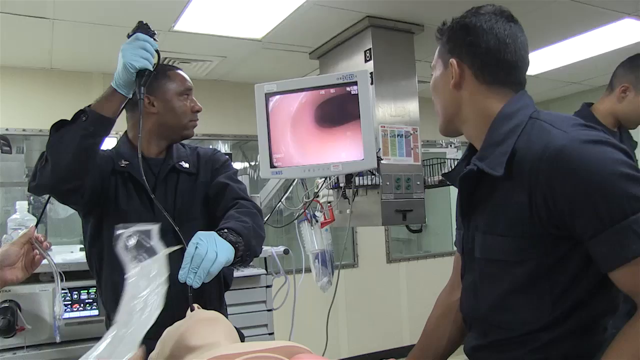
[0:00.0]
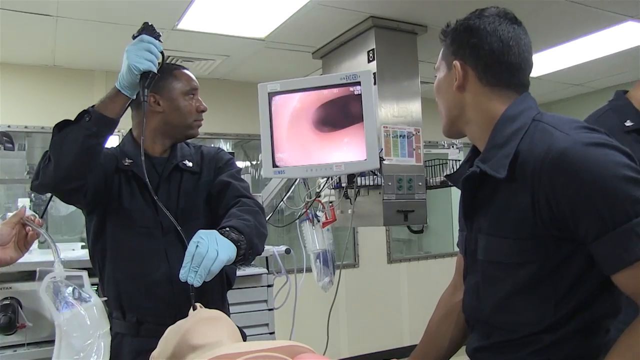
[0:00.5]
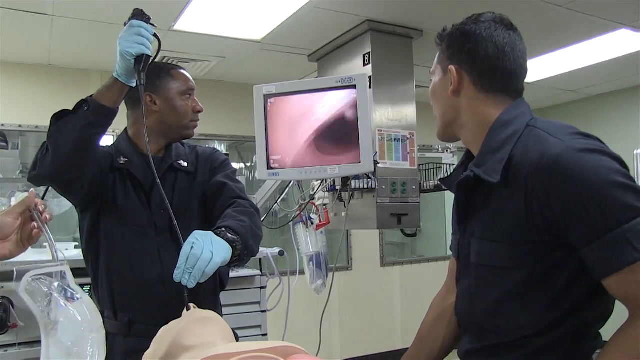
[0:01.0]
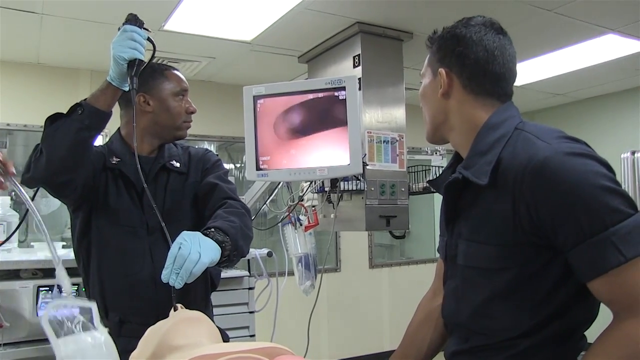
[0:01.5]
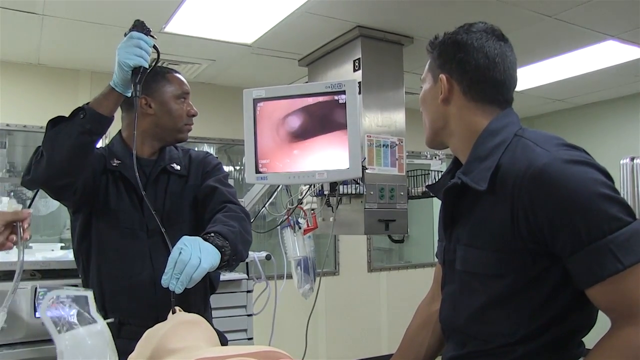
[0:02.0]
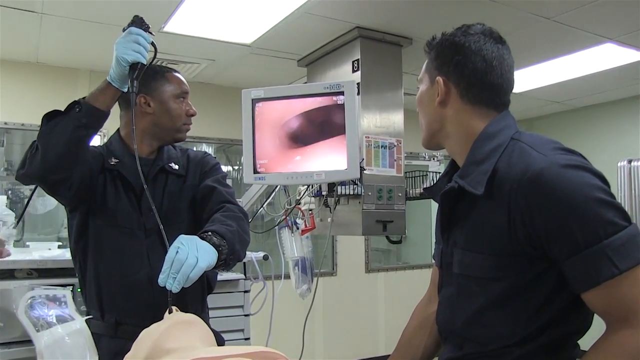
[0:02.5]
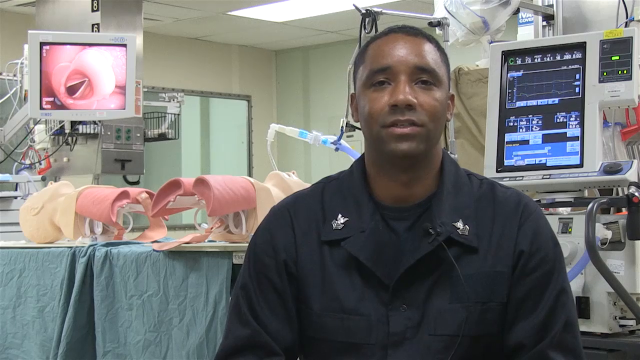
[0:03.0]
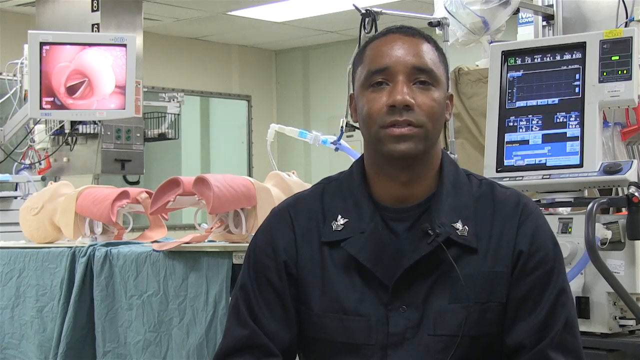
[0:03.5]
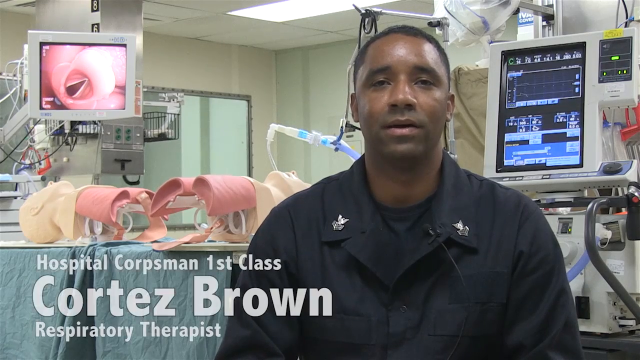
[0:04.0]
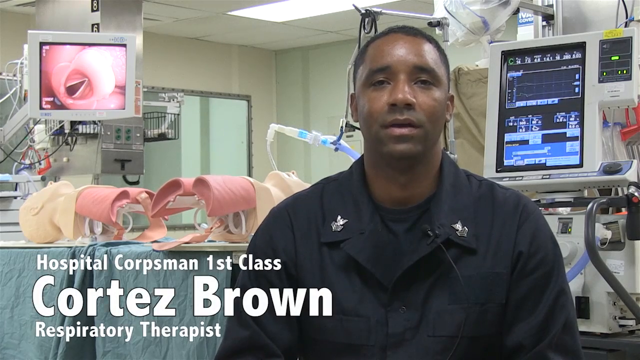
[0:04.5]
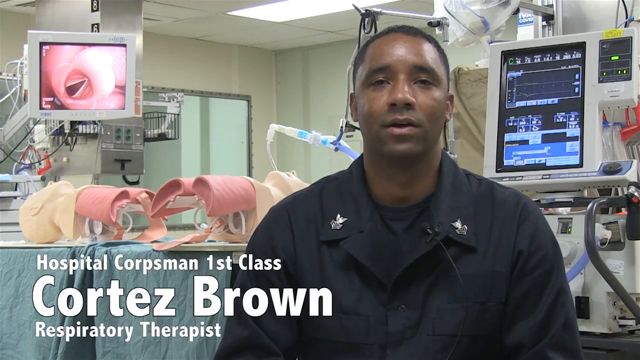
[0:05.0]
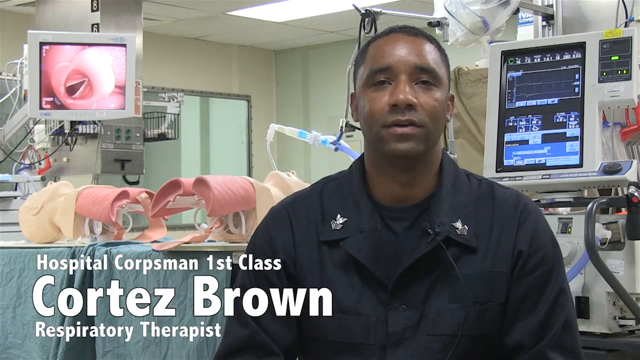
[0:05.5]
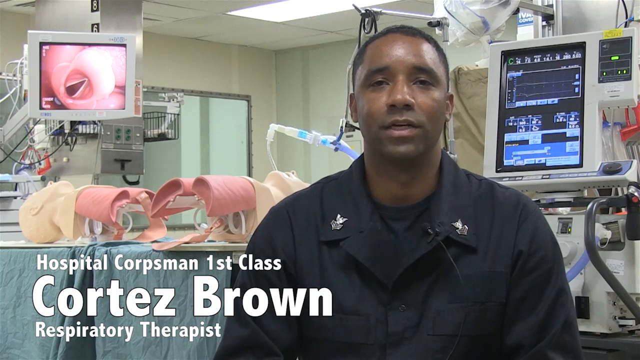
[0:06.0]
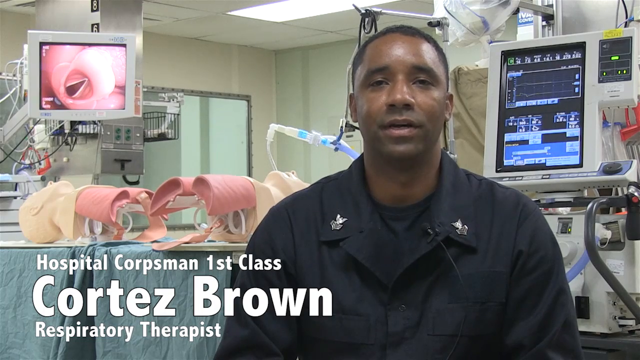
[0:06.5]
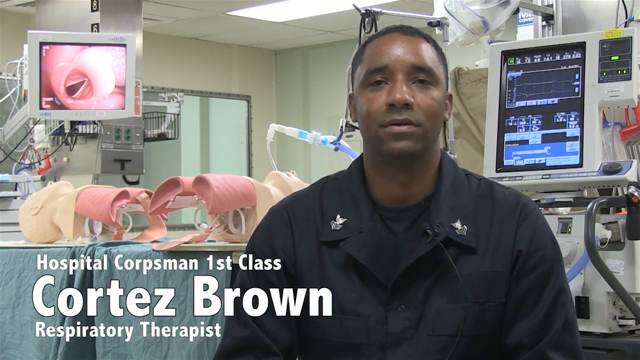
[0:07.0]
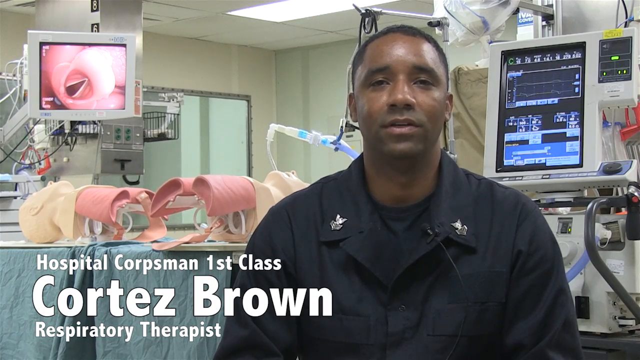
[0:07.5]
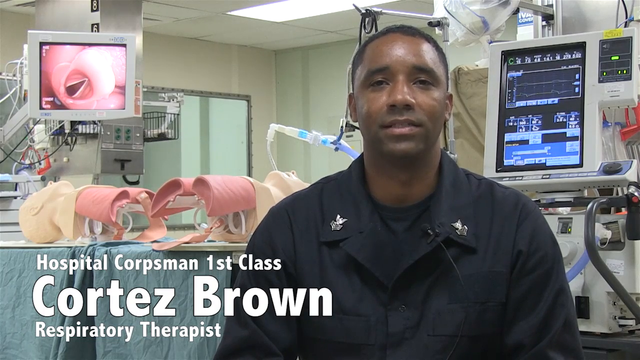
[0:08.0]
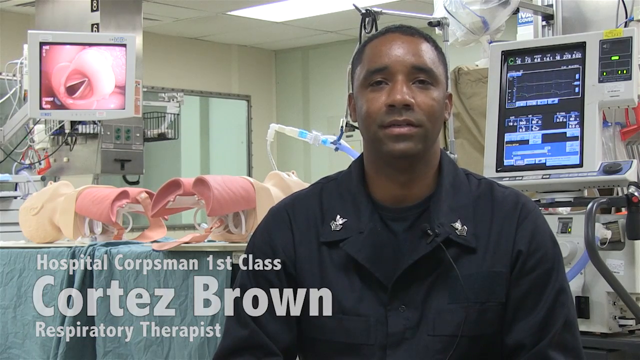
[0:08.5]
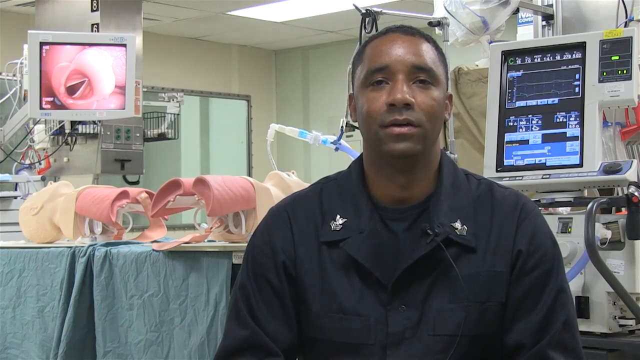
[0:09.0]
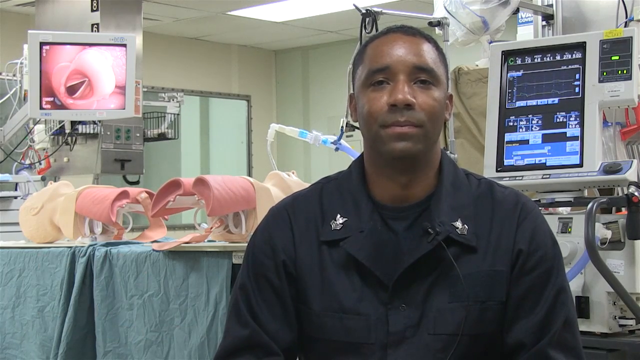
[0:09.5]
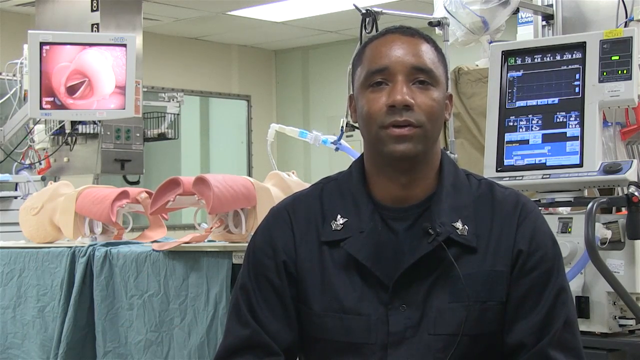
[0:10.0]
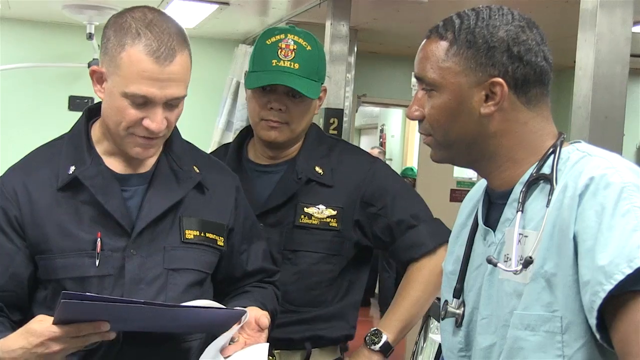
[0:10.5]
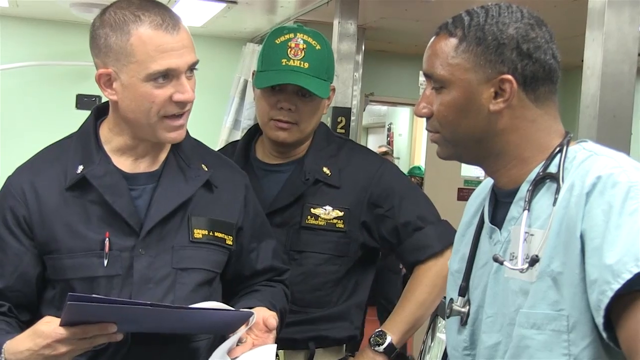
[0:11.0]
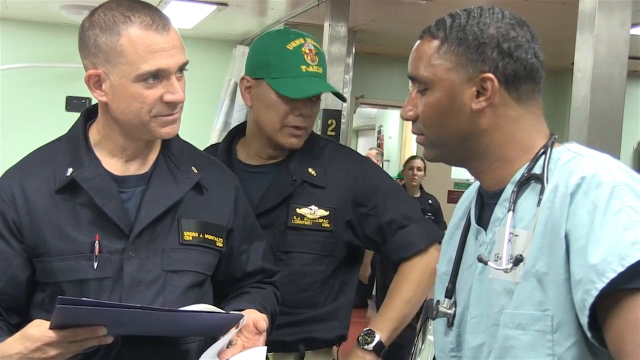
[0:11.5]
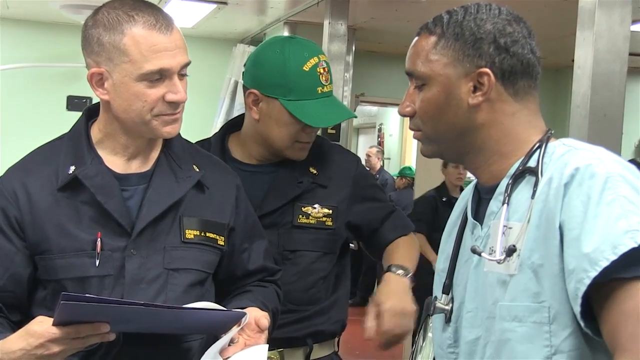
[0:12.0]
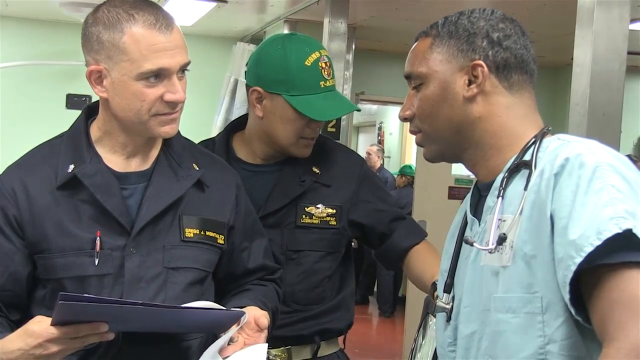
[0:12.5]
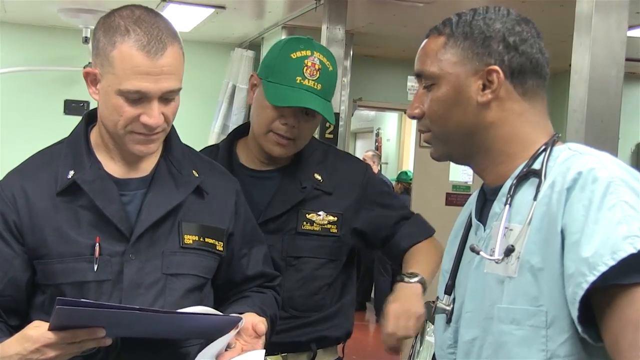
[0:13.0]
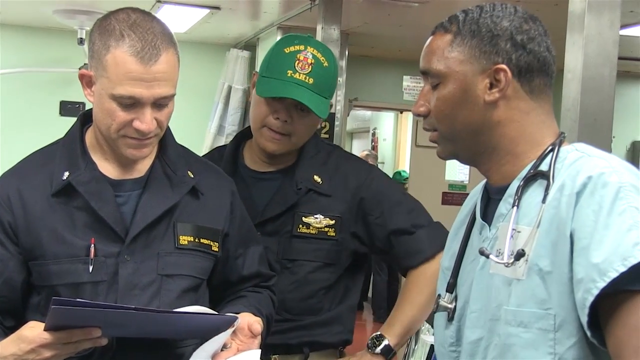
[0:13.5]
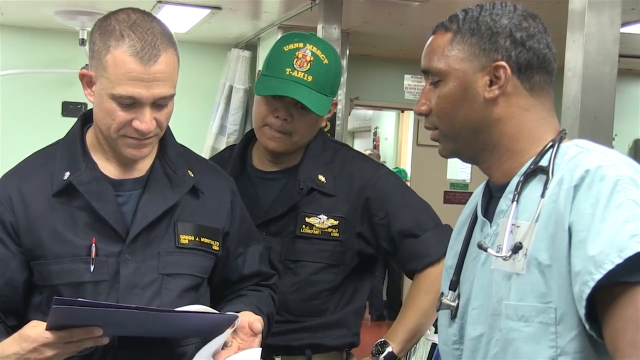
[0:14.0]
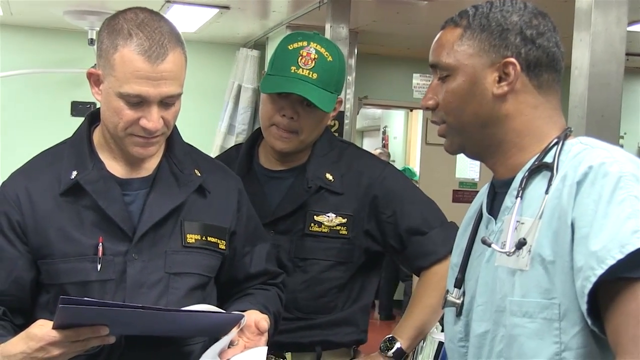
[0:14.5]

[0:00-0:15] The video is about life aboard the USNS Mercy ship. It shows a laboratory area on the ship with what is kind of a model or fake dummy serving as a patient. It has different wiring, and there is a TV screen. The dummy lets him practice intubating somebody with a tube if their breathing is compromised, and he seems to be practicing his skills. A monitor shows exactly the placement of where the tube should go, so he can see what he is doing. There is another medical device with a screen on it. The man is hospital corpsman first class Cortez Brown, a respiratory therapist, and he talks to the camera.